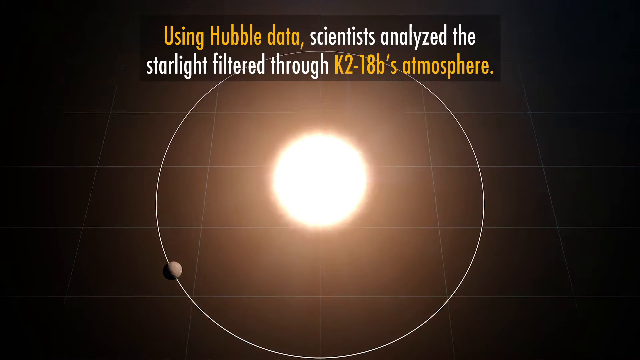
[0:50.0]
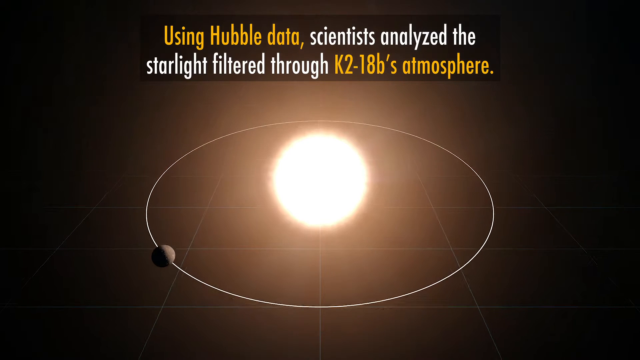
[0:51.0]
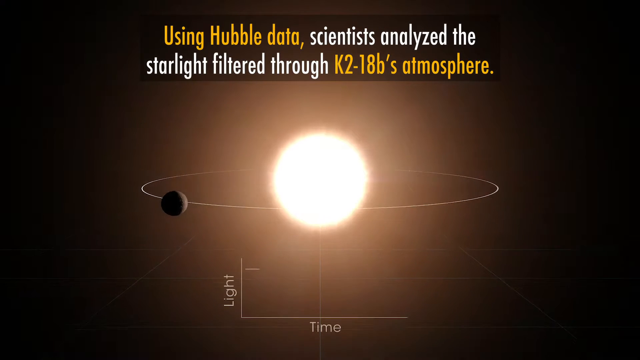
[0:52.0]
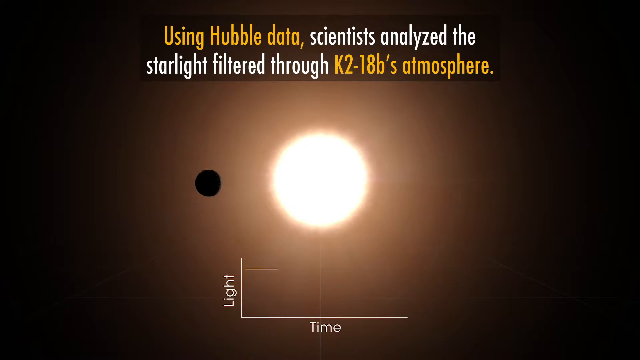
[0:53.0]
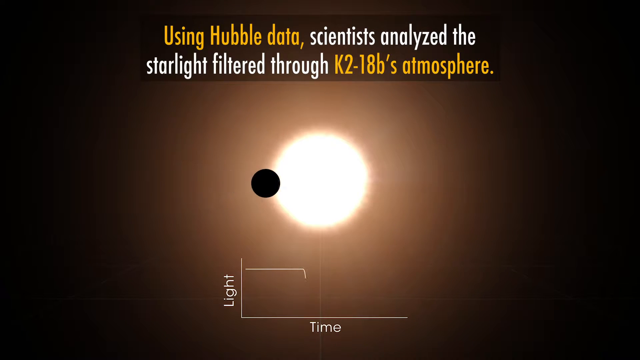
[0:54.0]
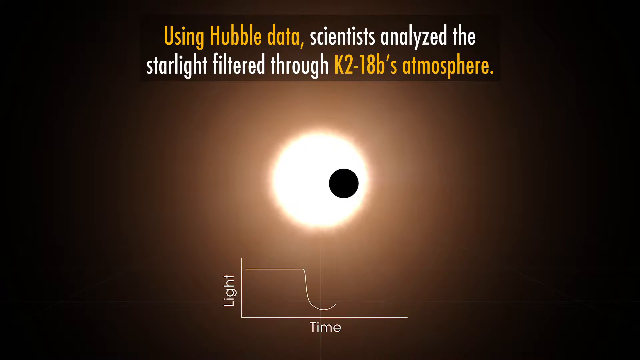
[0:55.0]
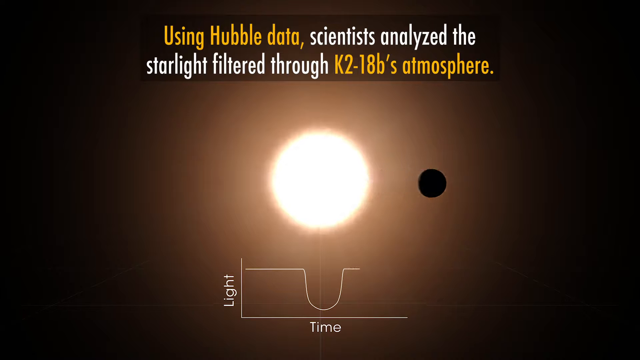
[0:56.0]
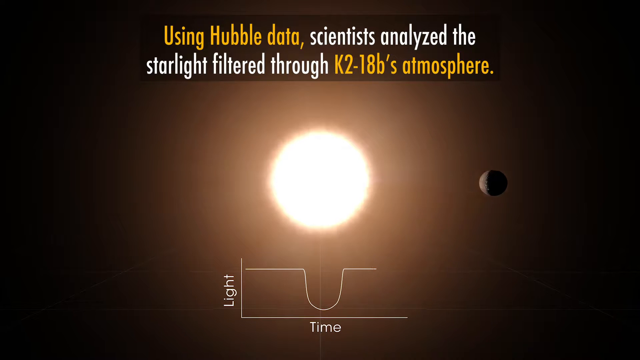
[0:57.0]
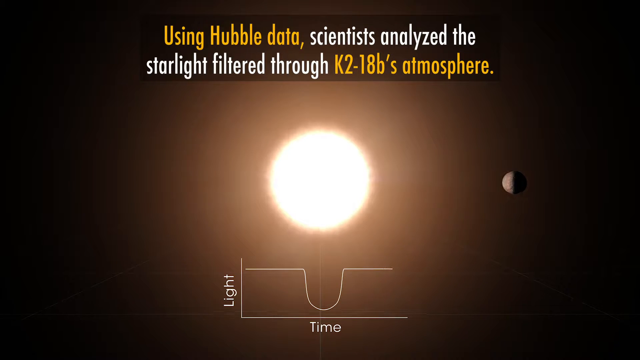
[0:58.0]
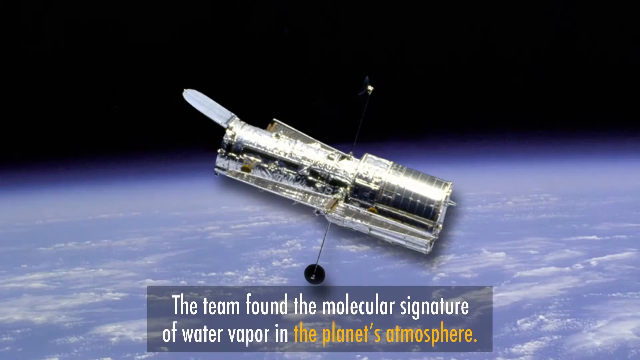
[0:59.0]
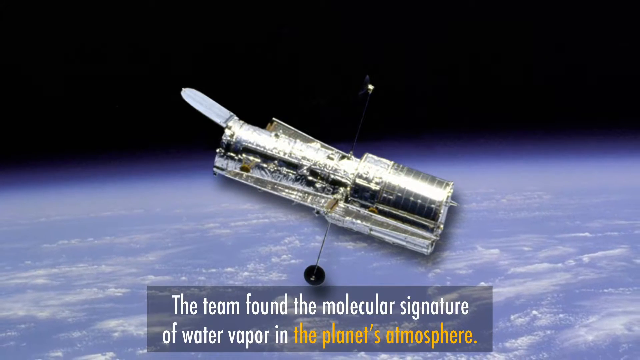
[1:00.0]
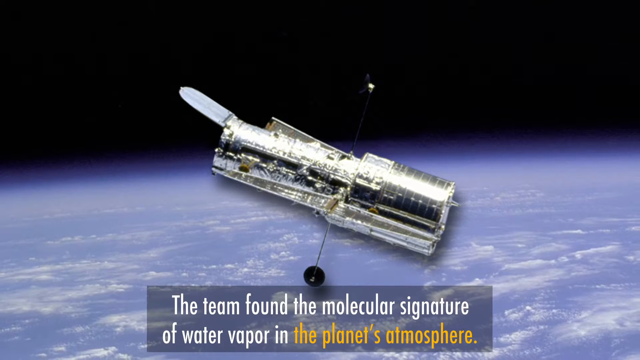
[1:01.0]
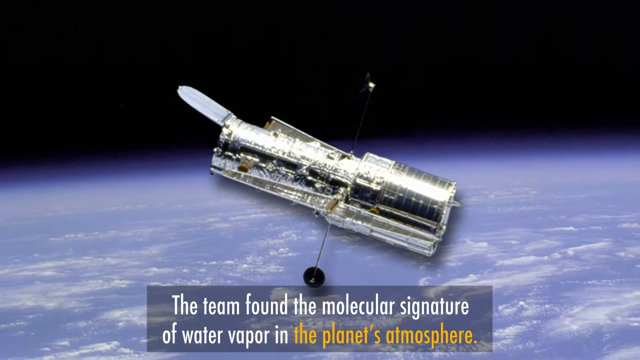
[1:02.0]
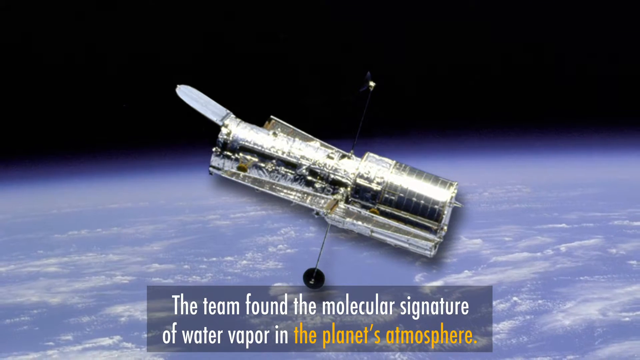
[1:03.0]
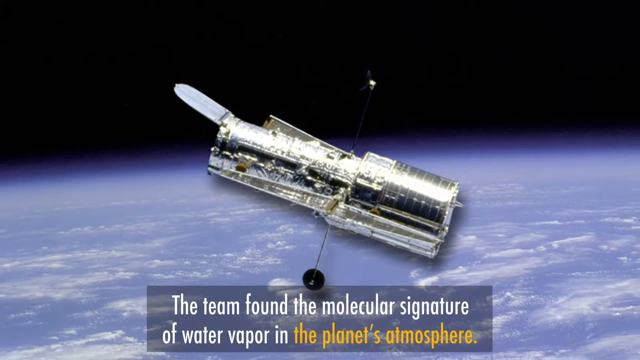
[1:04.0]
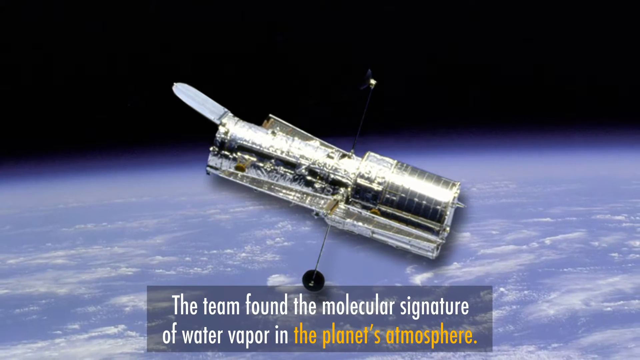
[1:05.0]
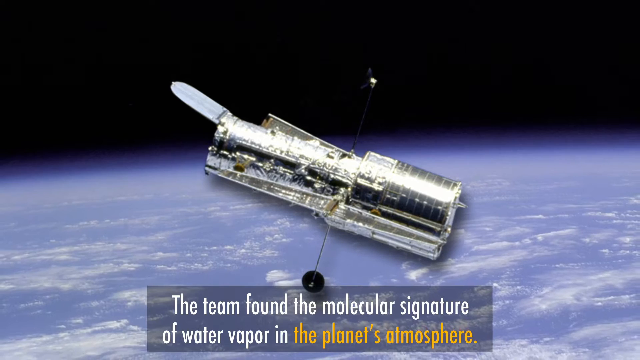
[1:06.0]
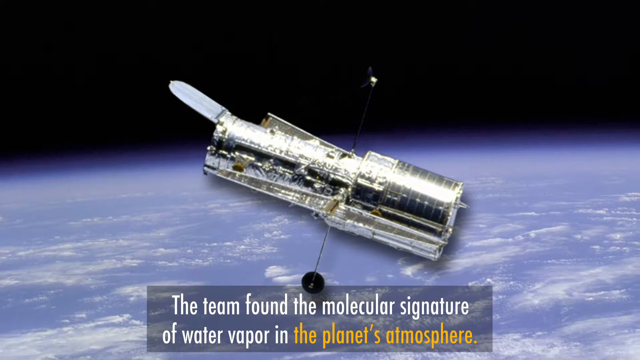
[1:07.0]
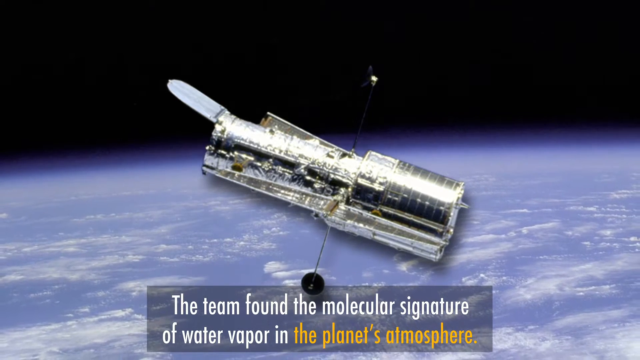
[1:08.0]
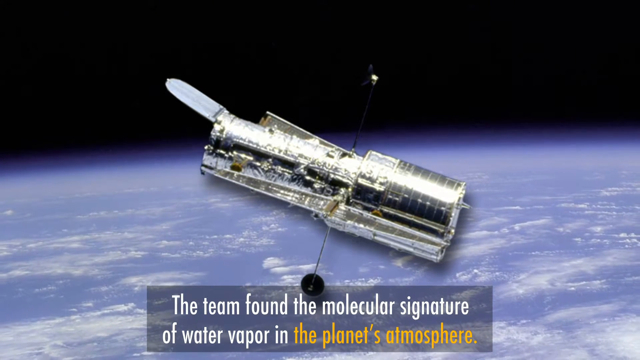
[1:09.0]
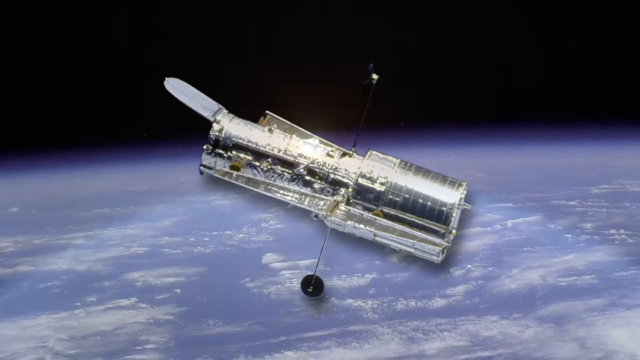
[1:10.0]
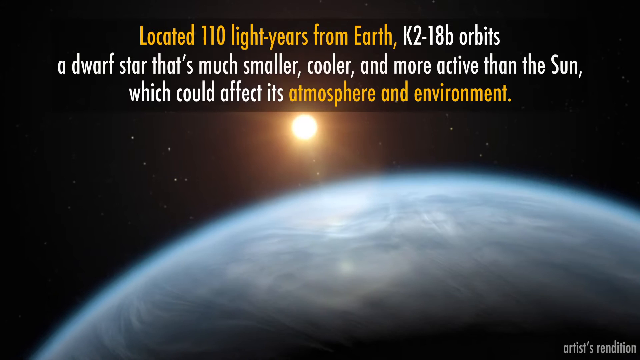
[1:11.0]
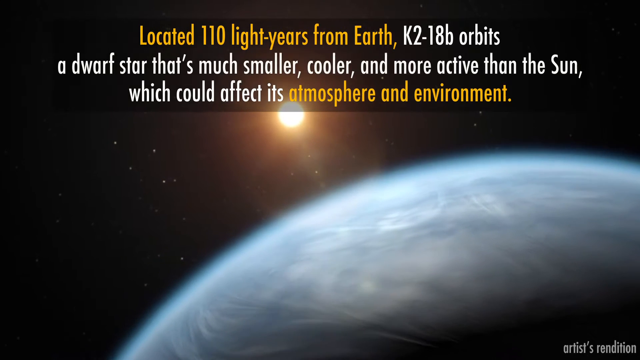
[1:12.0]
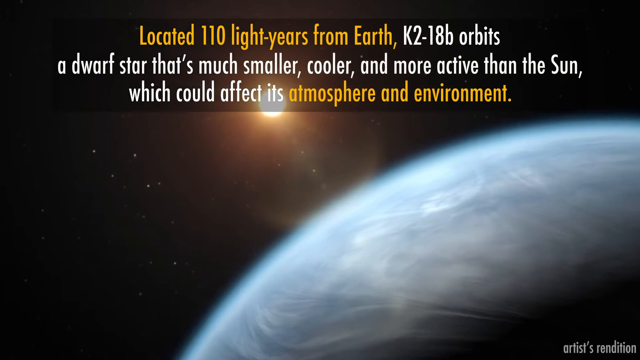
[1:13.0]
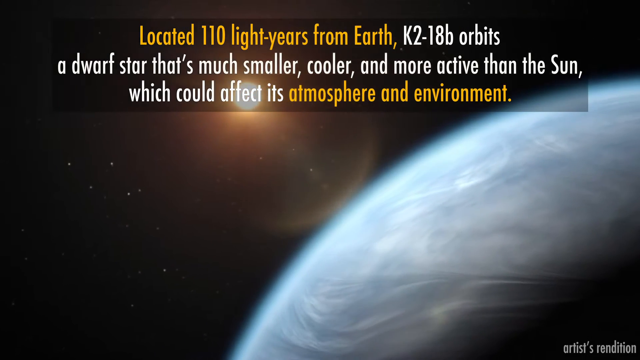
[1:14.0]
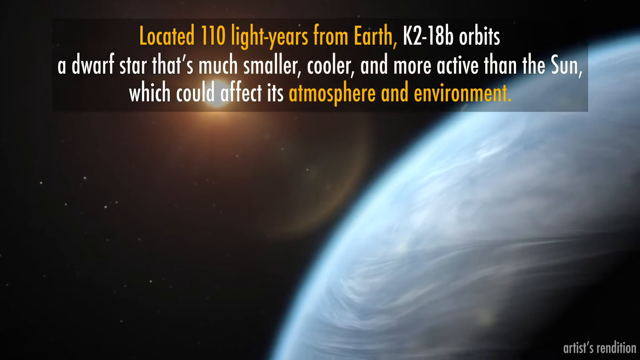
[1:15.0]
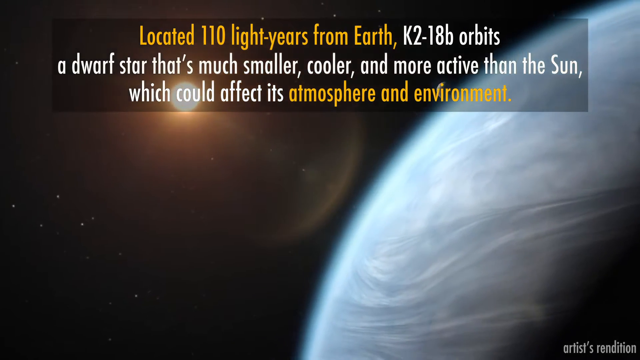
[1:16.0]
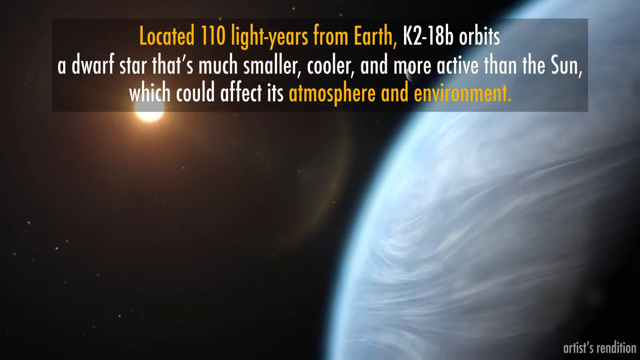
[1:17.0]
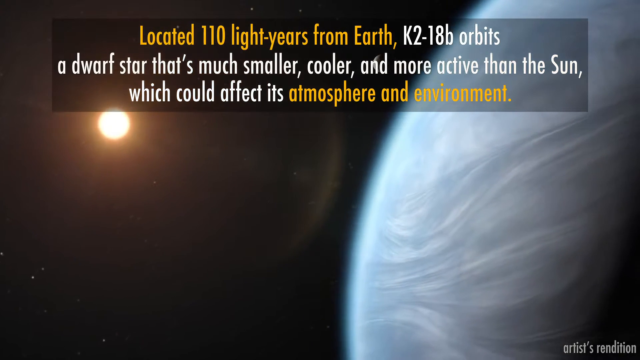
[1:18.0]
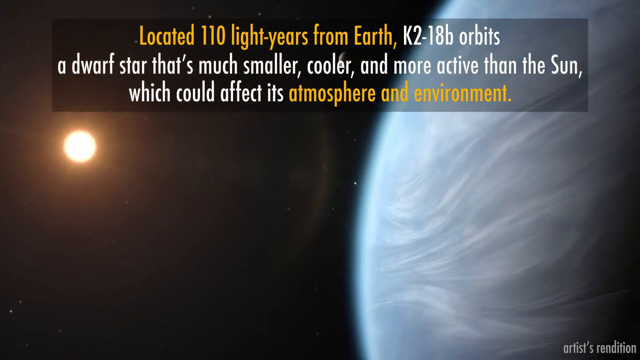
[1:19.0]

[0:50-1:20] A star or sun is in the middle with a white outline of a circle around it and a gray planet attached to that line, rotating counterclockwise. Text at the top says "using Hubble data, scientists analyzed the starlight filtered through K2-18b's atmosphere," along with "Hubblecast is produced by ESA, the European Southern Observatory." The overhead image becomes a vertical image, and at the bottom there are two perpendicular lines: the one going up has "light" written along it, and the one on the bottom has "time" written on it. A line comes off the light line, goes almost to the midline, swoops way down to just over where it says "time", then loops back up at the end of the time line and goes back to the same line. Meanwhile, over top, the sun appears with the gray planet rotating around it from left to right. Next comes an image of a silver satellite that kind of looks like a tin can on the right with another thinner, longer tin can stuck inside it. A planet is visible underneath; it looks blue with white clouds. Text at the bottom says "the team found the molecular signature of water vapor in the planet's atmosphere." After that, a black sky with stars appears, with a sun in the background. In the foreground, a blurry planet goes from the bottom up to the right side, with only its top part visible. Text at the top says "located 110 light years from Earth, K2-18b orbits a dwarf star that's much smaller, cooler, and more active than the sun, which could affect its atmosphere and environment."